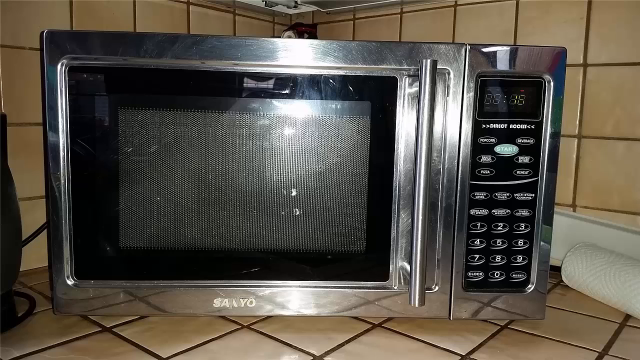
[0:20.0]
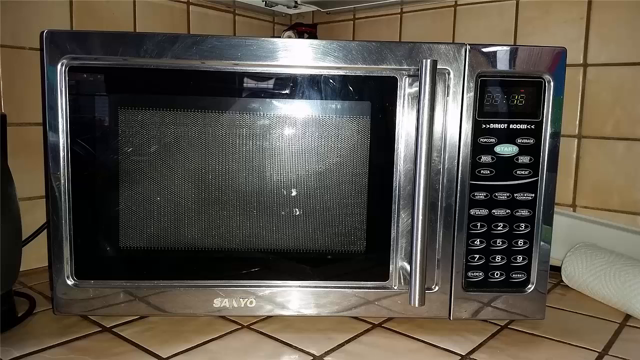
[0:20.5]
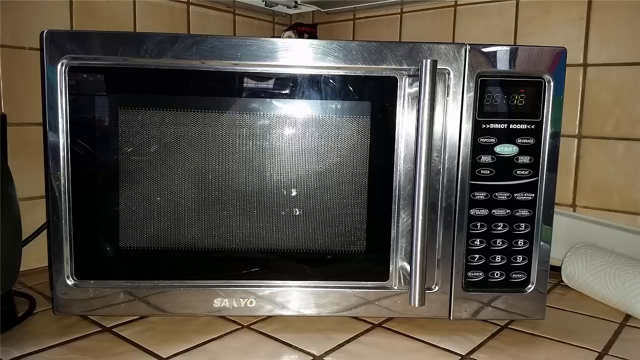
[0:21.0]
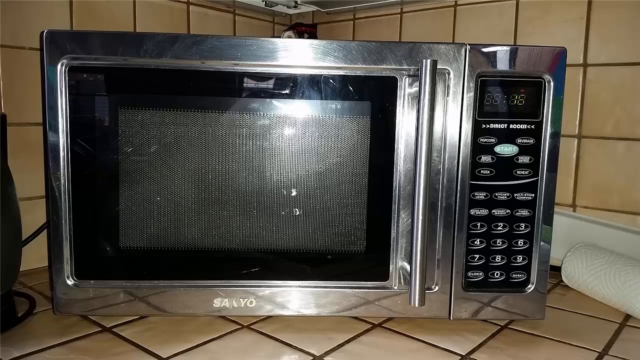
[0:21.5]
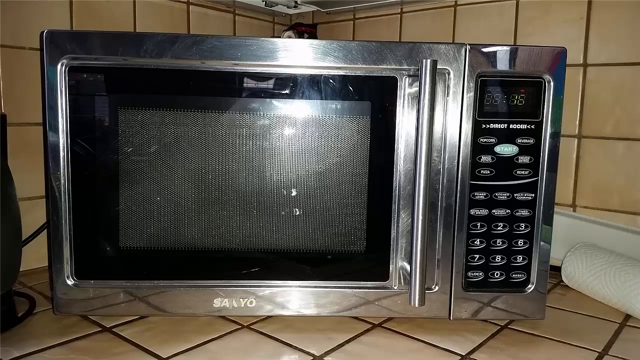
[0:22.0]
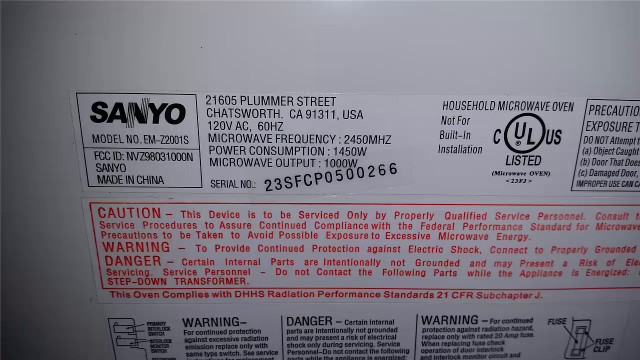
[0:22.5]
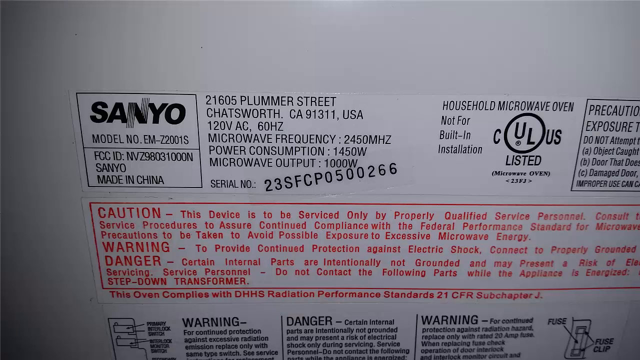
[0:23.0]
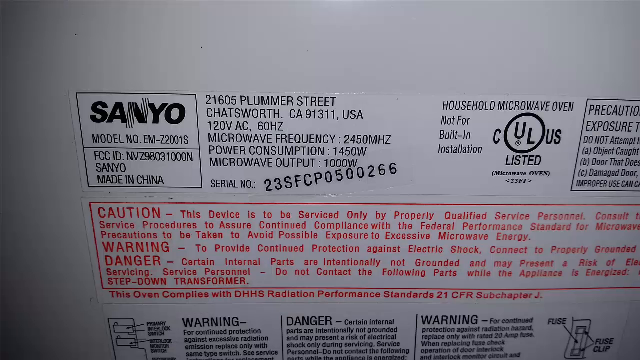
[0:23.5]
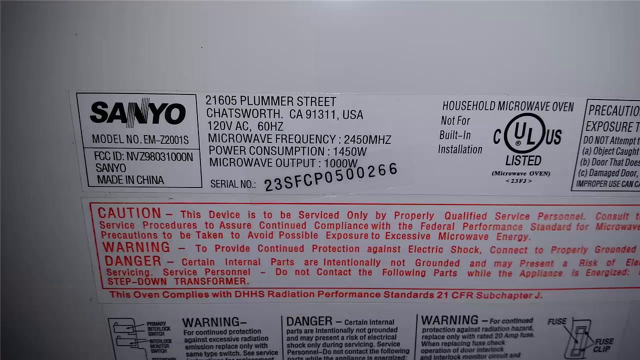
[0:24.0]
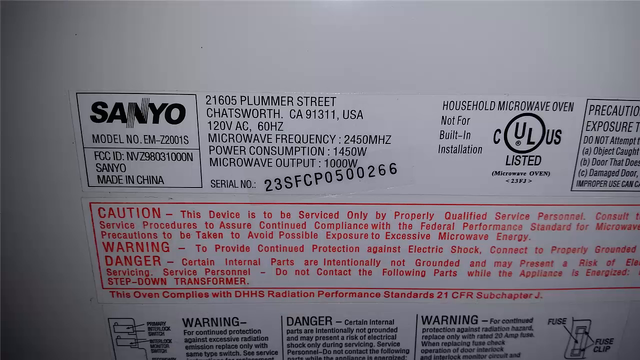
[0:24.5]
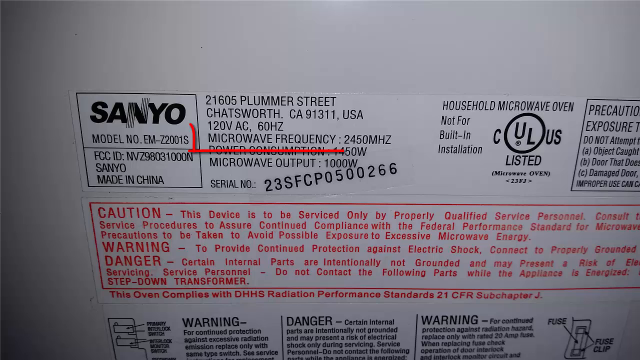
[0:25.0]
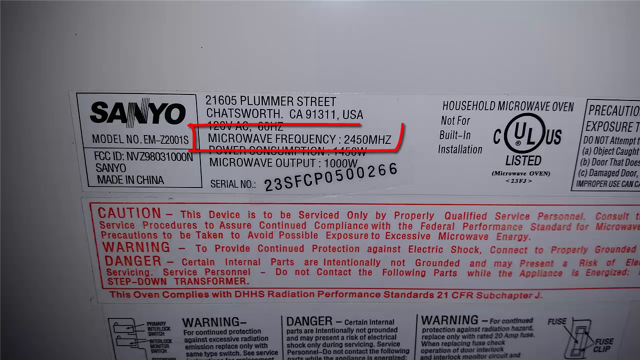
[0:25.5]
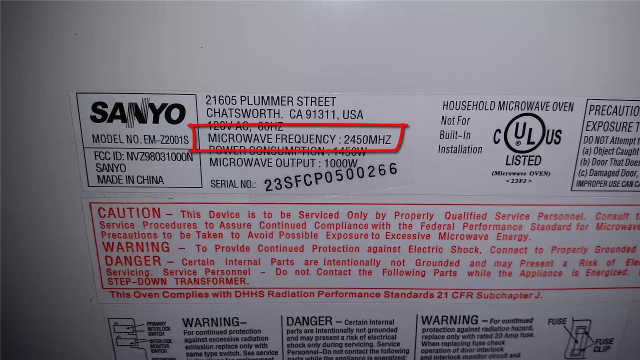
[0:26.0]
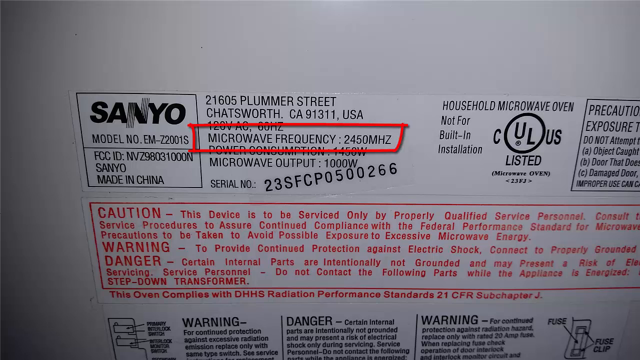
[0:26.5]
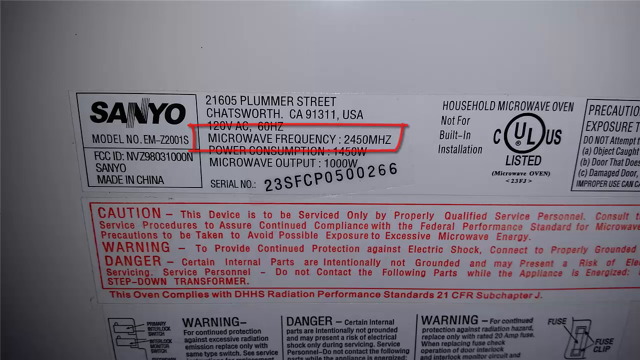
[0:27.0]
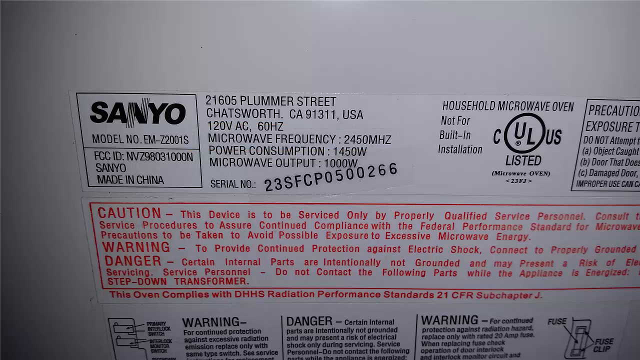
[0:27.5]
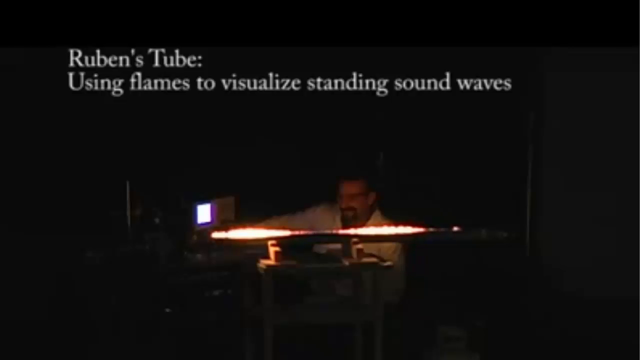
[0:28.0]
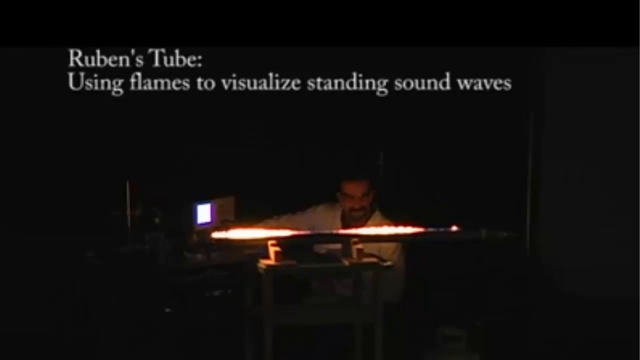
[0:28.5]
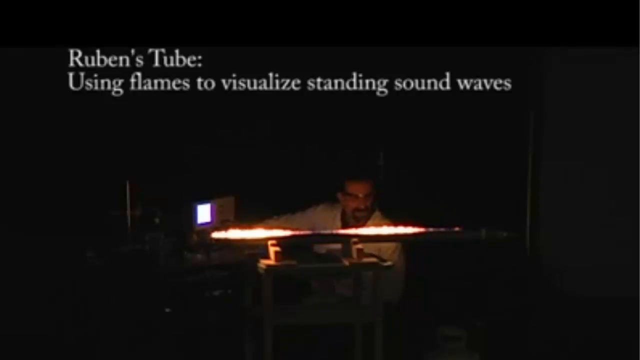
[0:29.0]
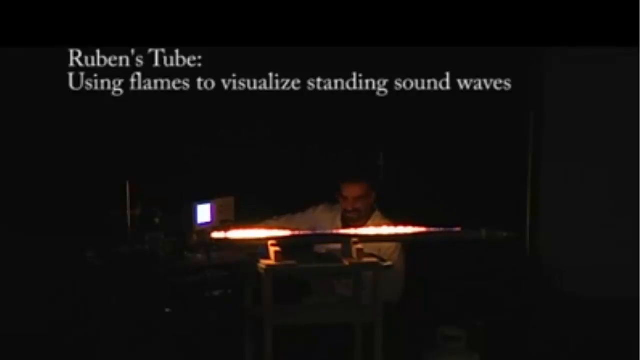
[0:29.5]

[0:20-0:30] The microwave is on the countertop. It is silver and black, with a beige-orange tile backsplash behind it, and the countertop is also beige tile. A still picture of the back of the microwave appears; it says "Sanyo Household Microwave Oven" and lists the address of the producer, as well as a caution and warning. The microwave frequency, "2450 millihertz," is highlighted in red. The image changes to a man working on what looks like a horizontal flame, with writing above it that says "Ruben's tube using flames to visualize standing sound waves."